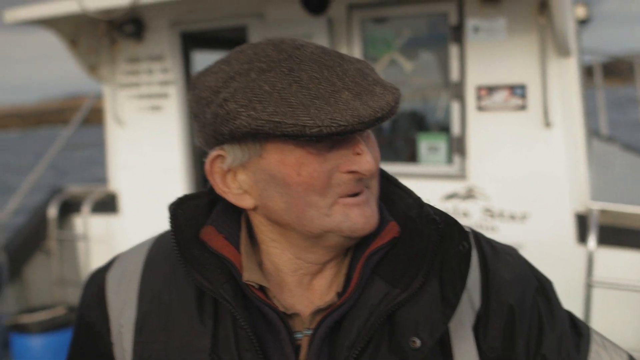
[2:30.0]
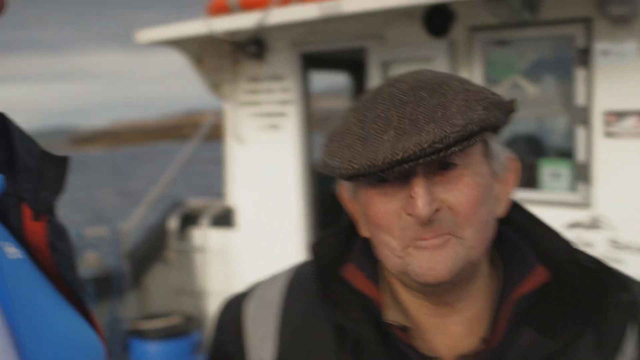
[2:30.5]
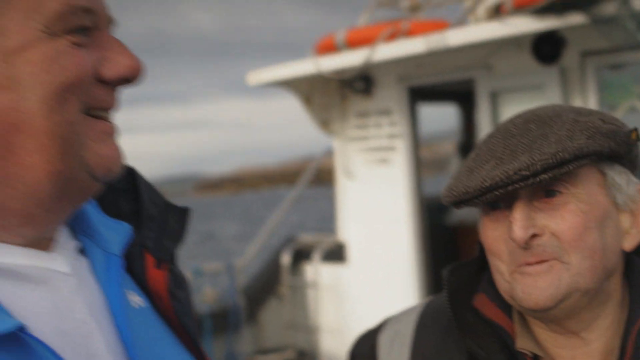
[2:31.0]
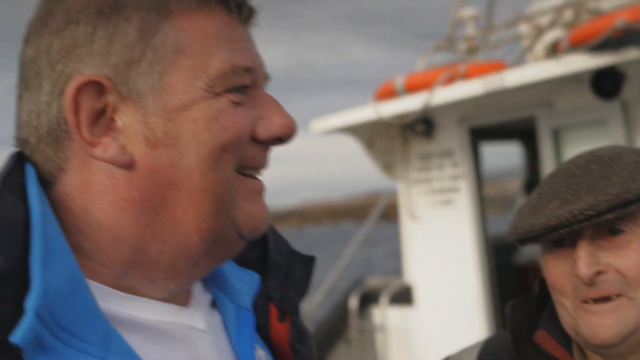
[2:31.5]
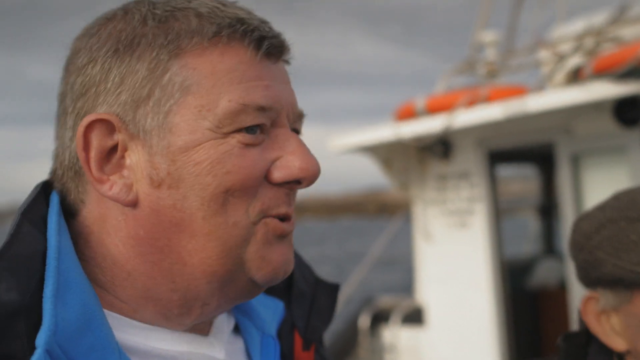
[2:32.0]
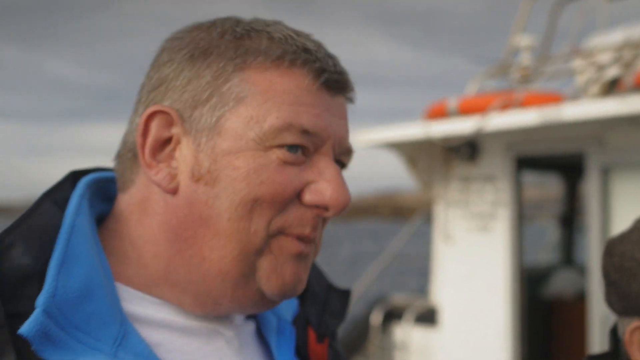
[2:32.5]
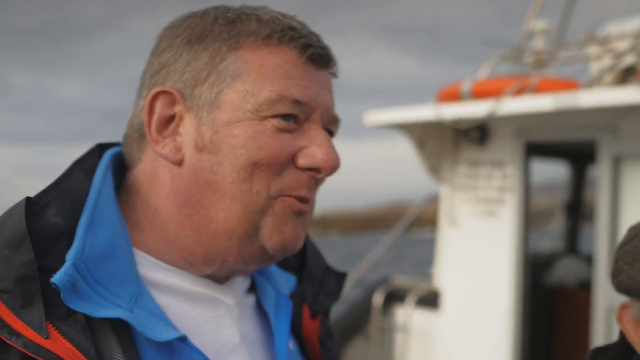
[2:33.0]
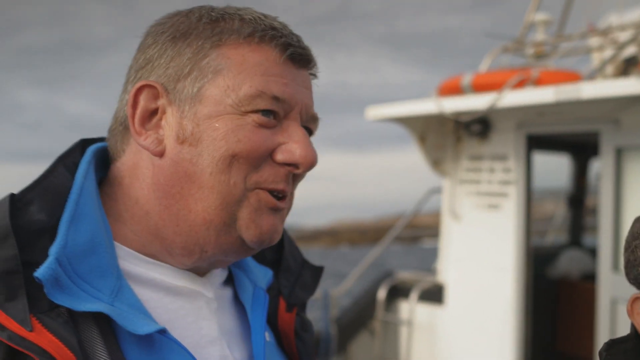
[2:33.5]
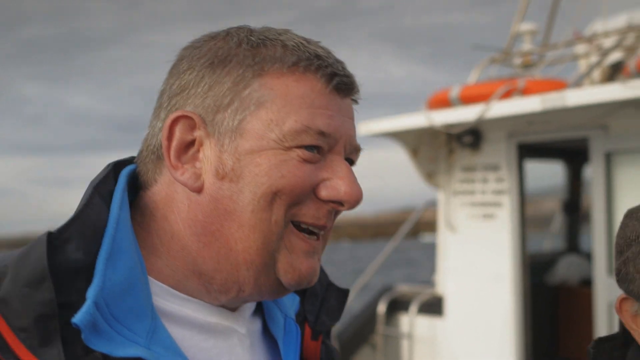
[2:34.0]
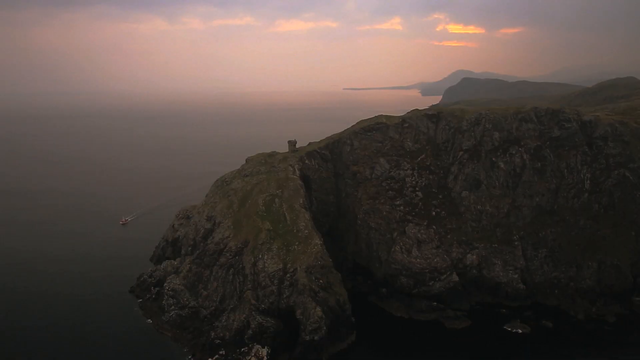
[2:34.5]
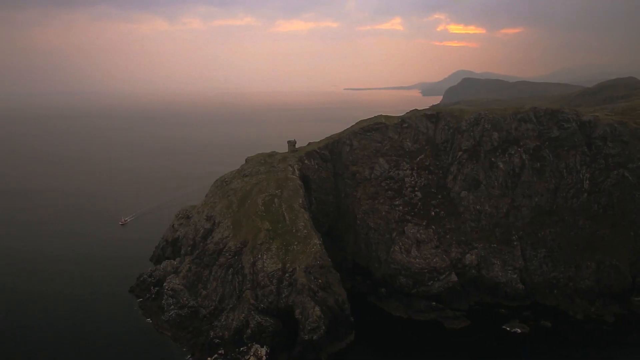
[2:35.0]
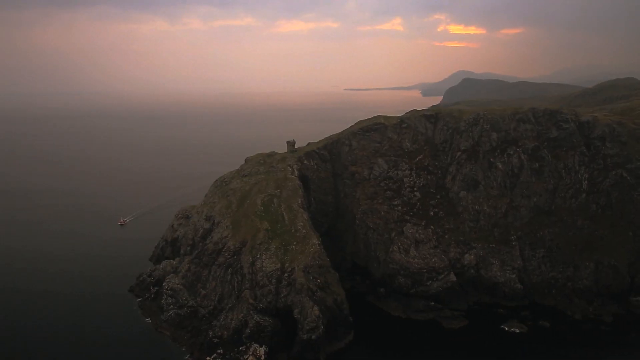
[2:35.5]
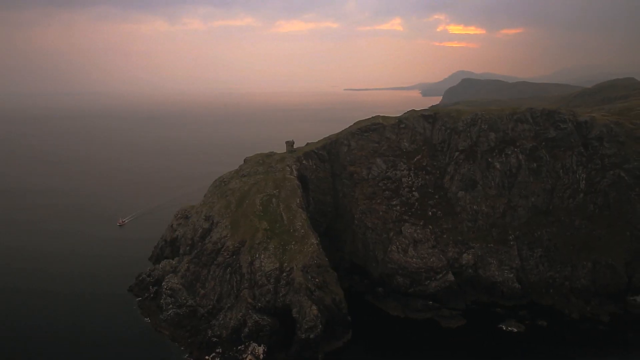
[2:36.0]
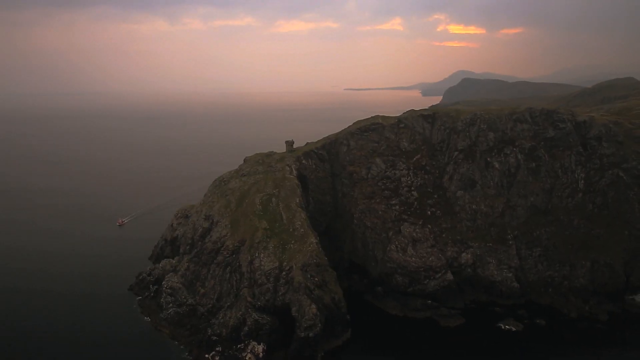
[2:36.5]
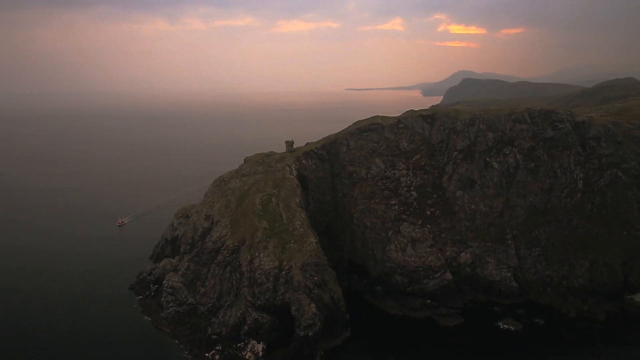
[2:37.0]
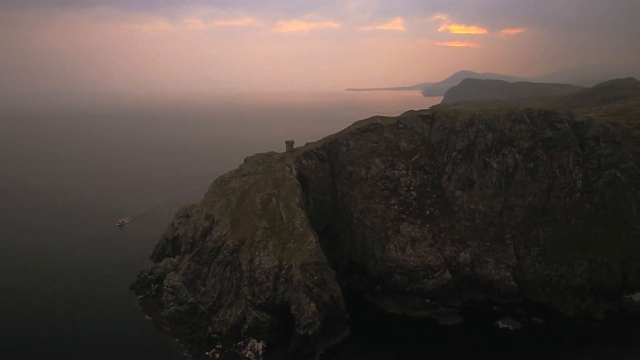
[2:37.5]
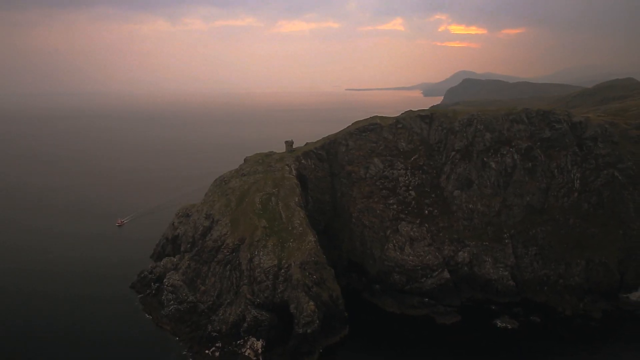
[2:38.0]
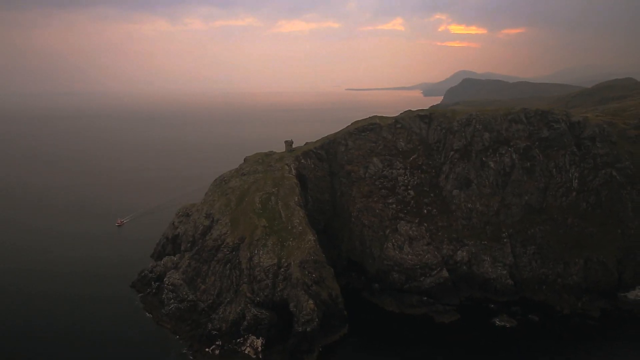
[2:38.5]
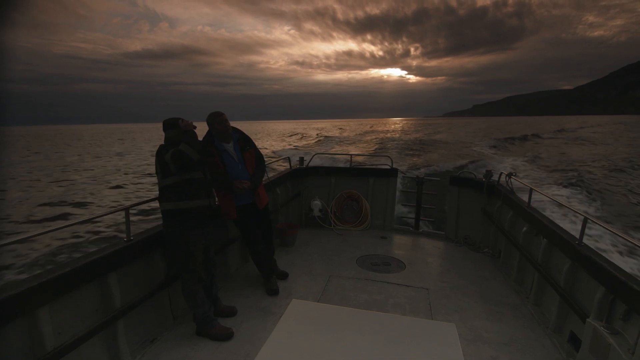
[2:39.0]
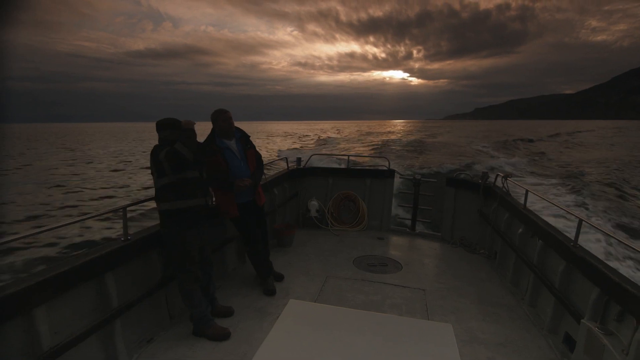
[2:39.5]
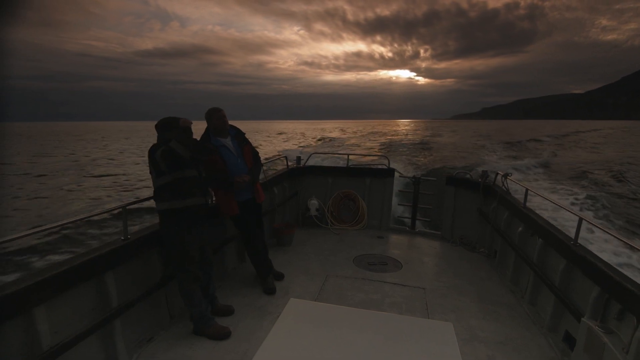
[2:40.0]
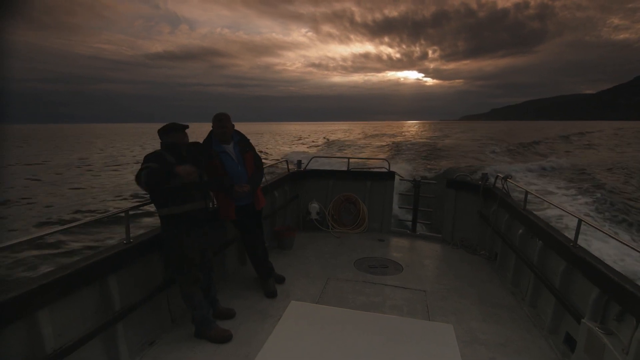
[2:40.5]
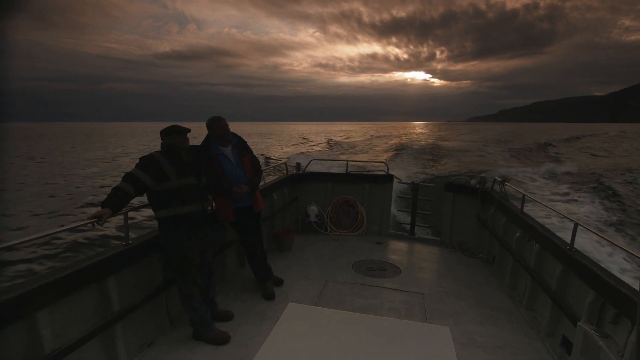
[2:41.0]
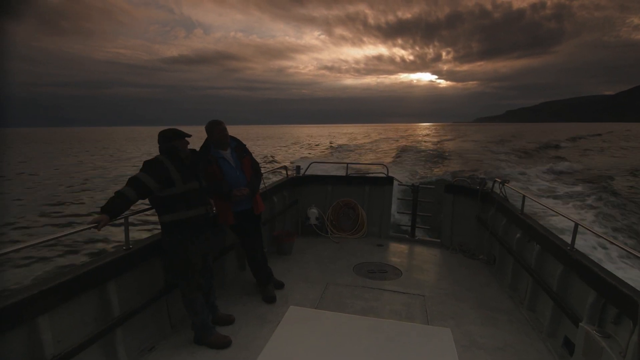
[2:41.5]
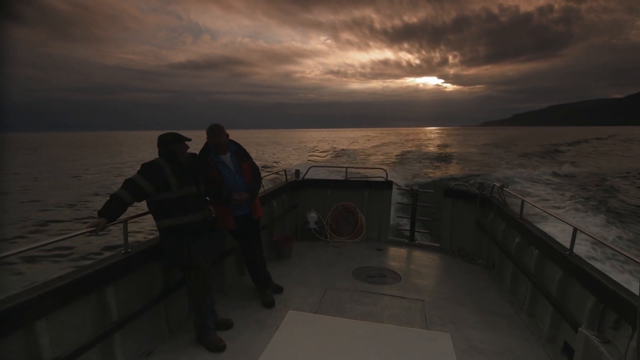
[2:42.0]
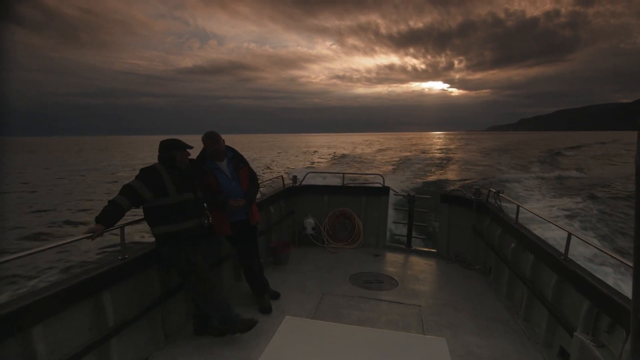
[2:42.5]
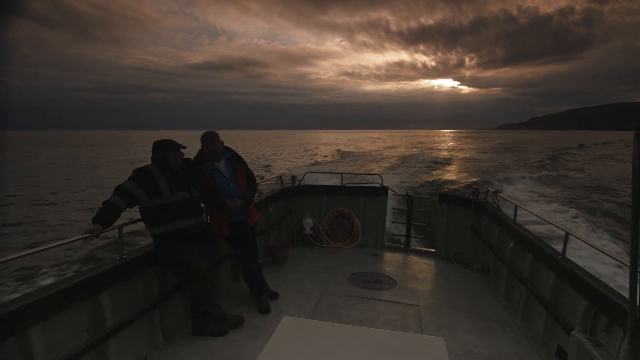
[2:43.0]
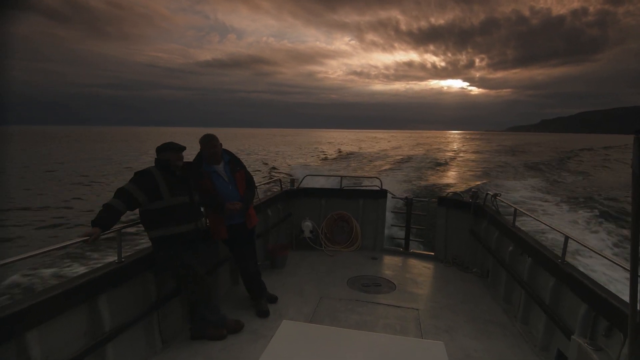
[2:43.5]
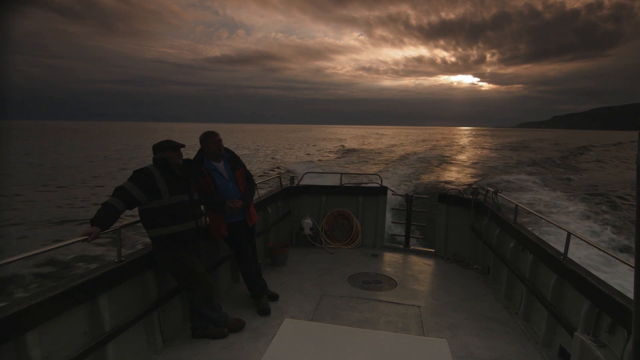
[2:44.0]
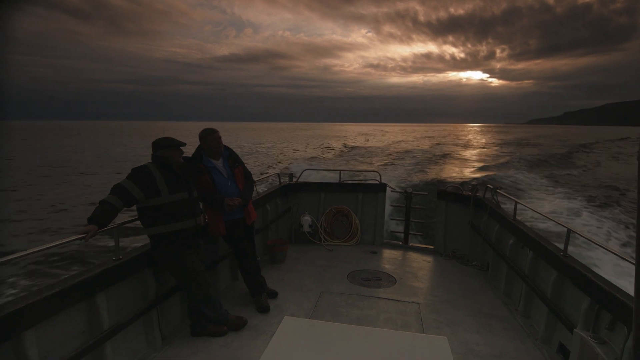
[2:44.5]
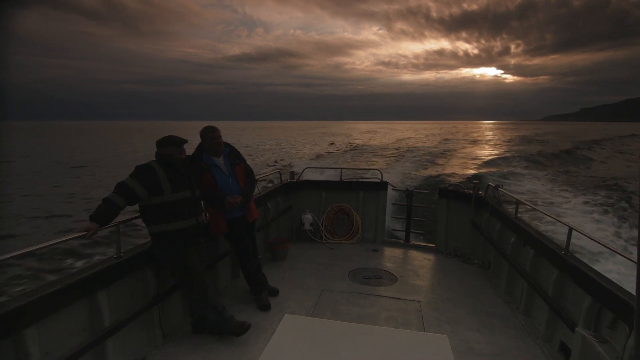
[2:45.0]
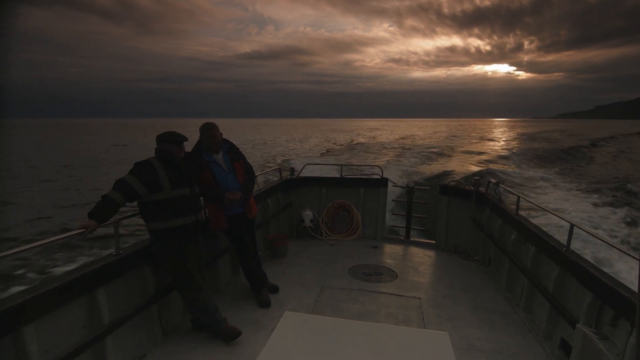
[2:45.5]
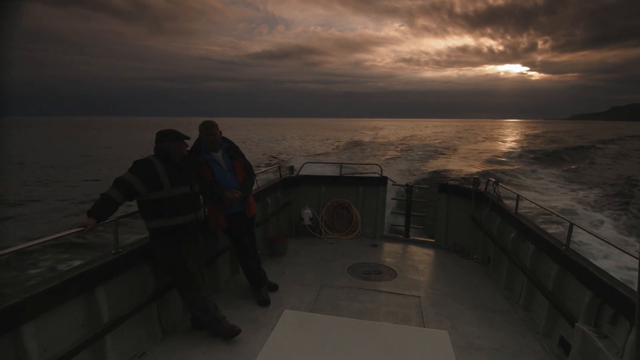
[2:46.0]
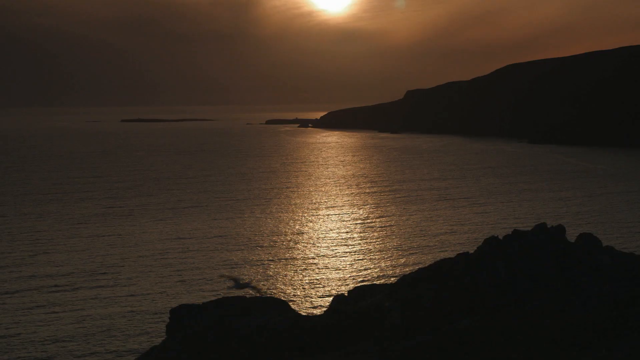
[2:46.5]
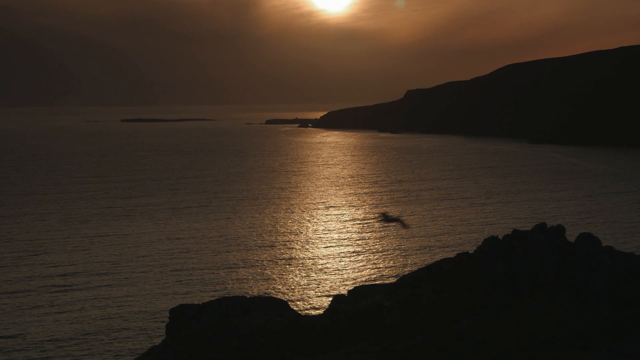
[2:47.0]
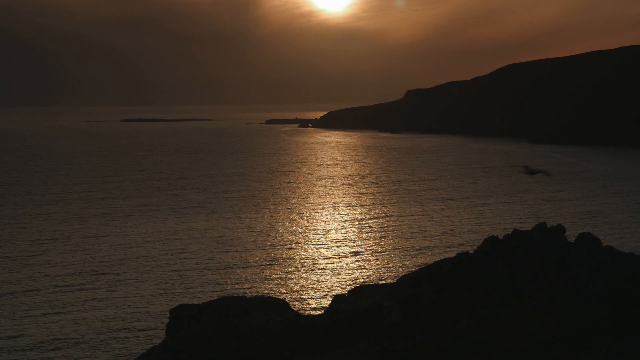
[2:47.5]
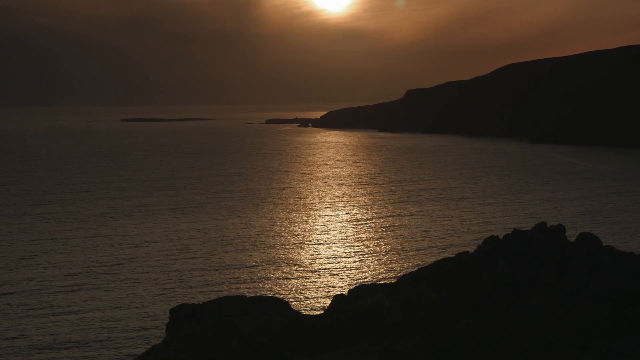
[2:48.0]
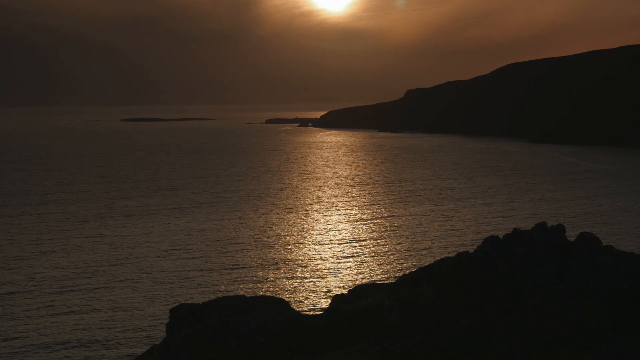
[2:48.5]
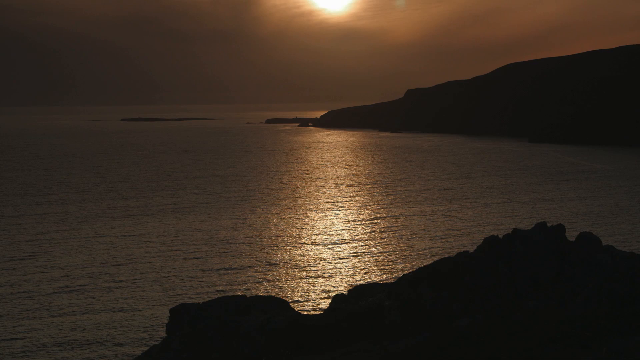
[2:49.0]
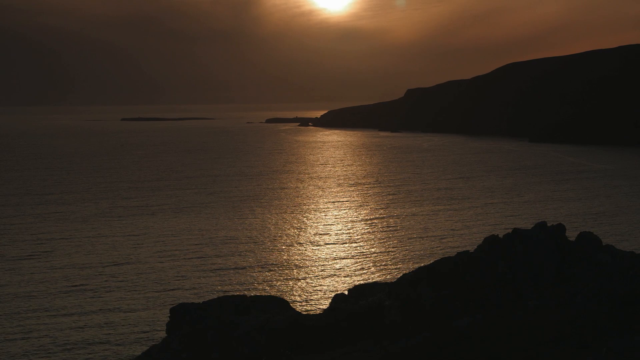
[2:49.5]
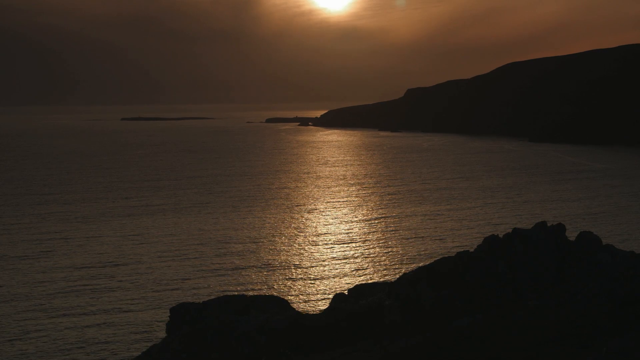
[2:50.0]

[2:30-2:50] The old man talks to the man in the blue jacket, and the lighthouse is then shown from a distance. The skies look very dark and gloomy, almost like the end of the world. The sun is barely peeking through the clouds, turning the sky a gold-black color that is reflected on the surface of the sea. The shot ends with the lighthouse on the plateau under the dark, gloomy atmosphere, with a few seagulls flying.